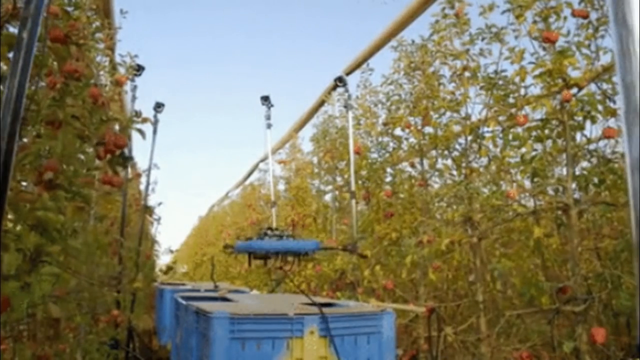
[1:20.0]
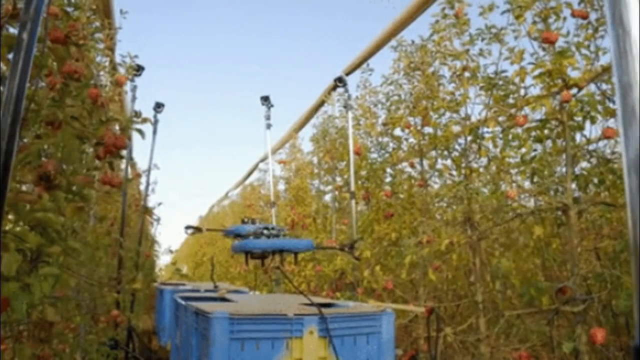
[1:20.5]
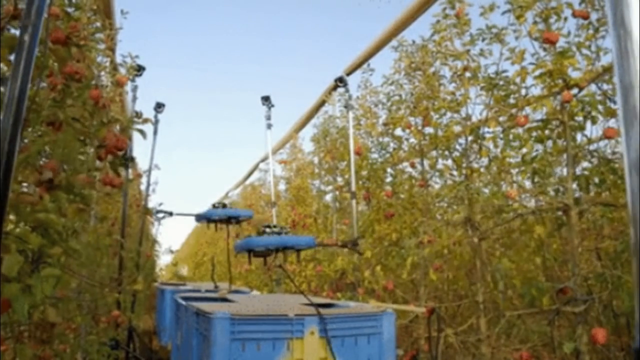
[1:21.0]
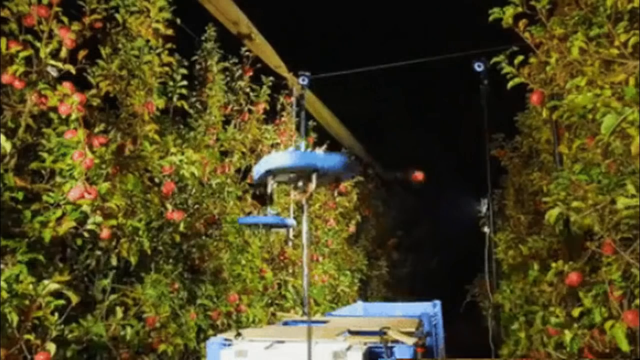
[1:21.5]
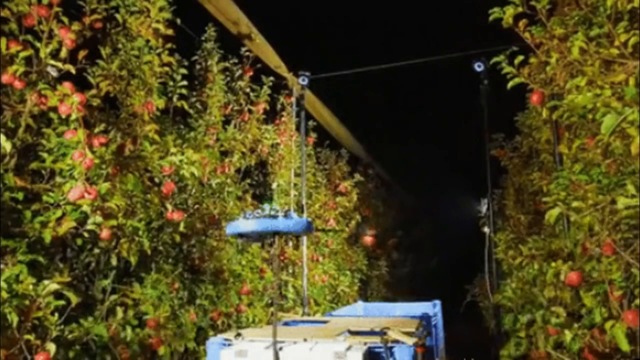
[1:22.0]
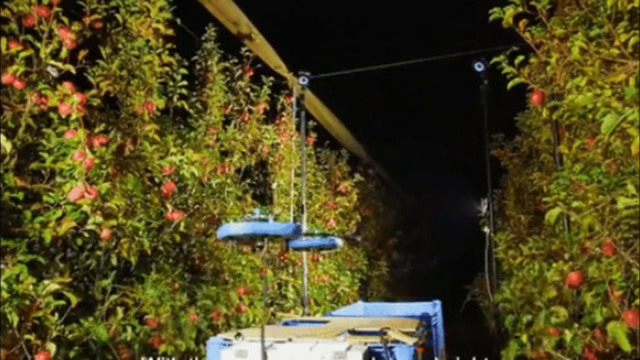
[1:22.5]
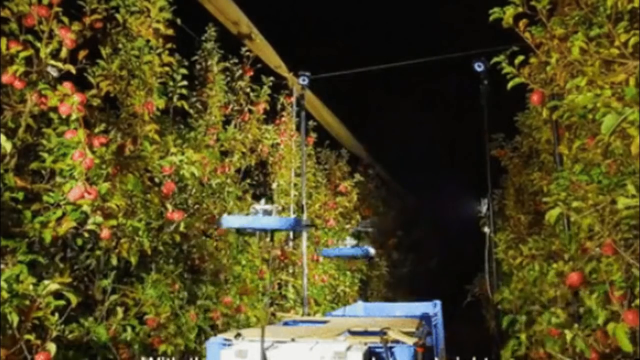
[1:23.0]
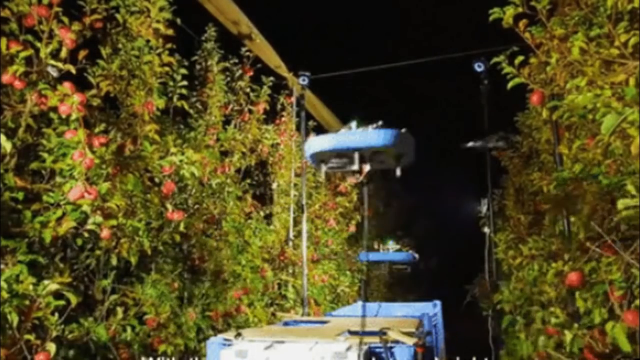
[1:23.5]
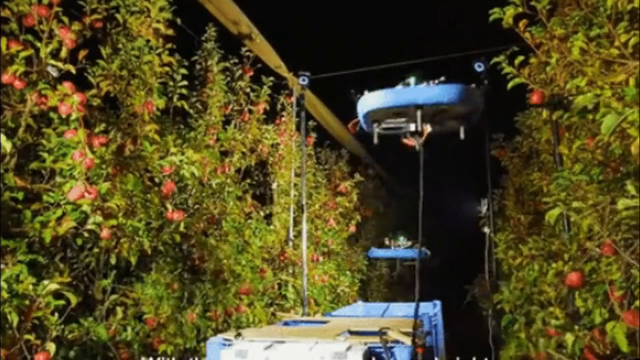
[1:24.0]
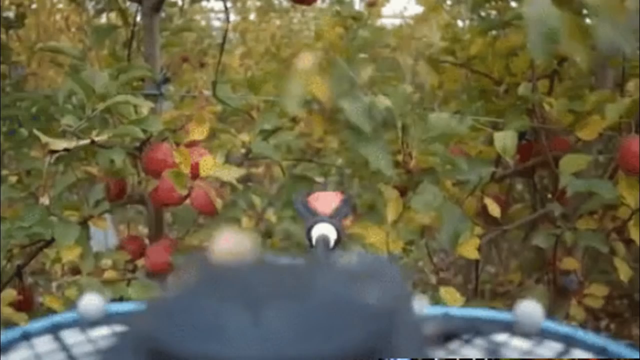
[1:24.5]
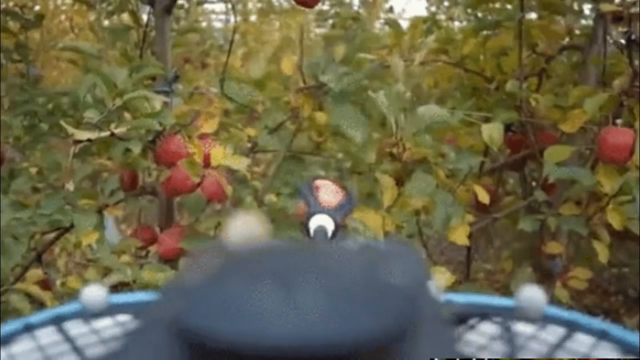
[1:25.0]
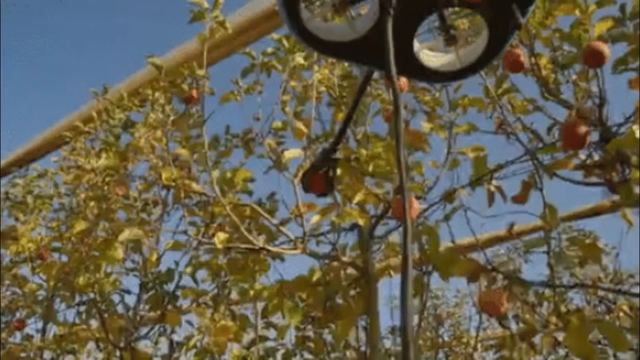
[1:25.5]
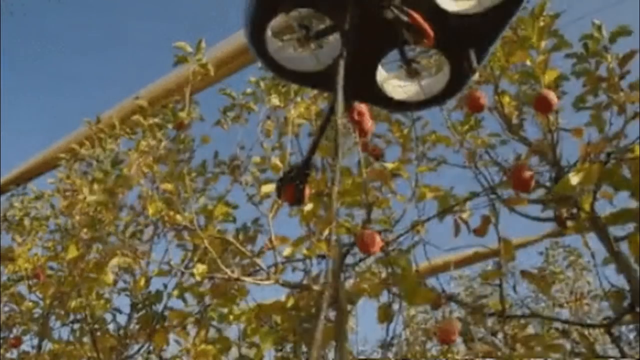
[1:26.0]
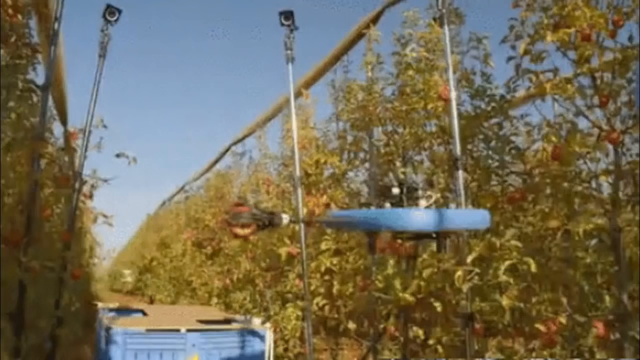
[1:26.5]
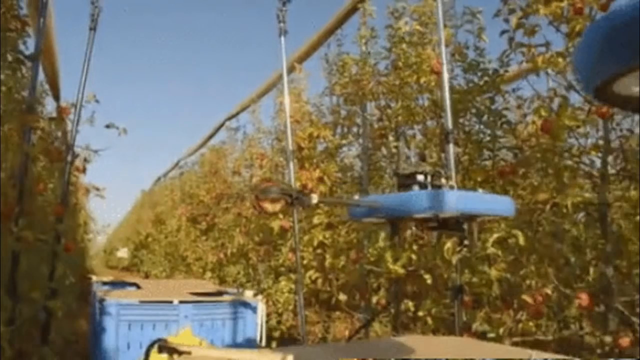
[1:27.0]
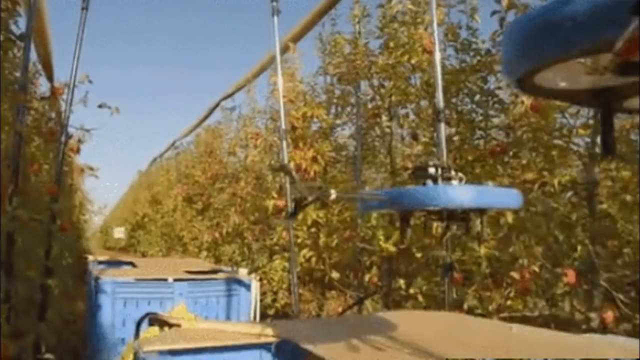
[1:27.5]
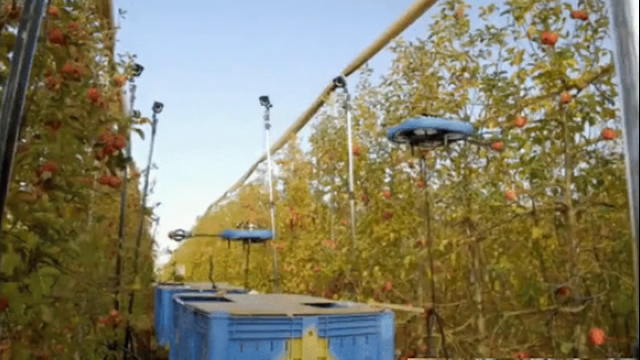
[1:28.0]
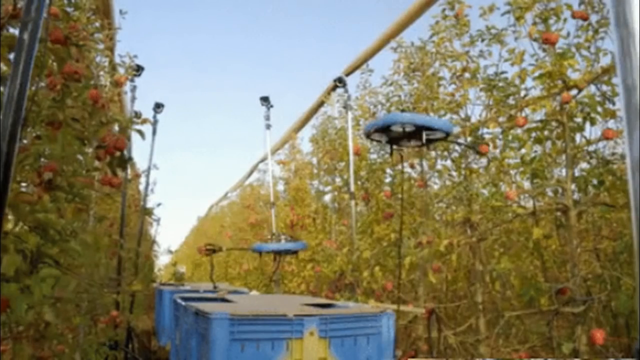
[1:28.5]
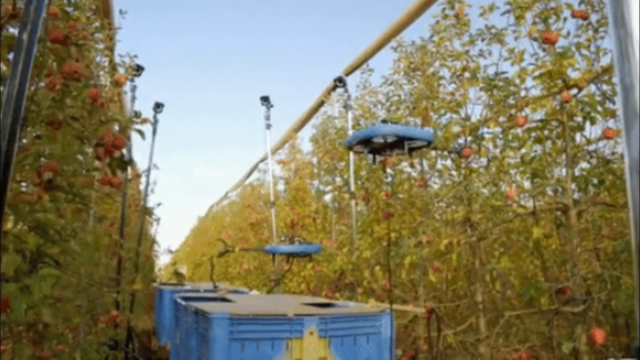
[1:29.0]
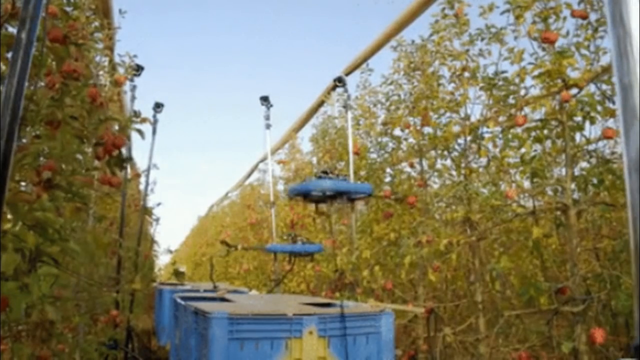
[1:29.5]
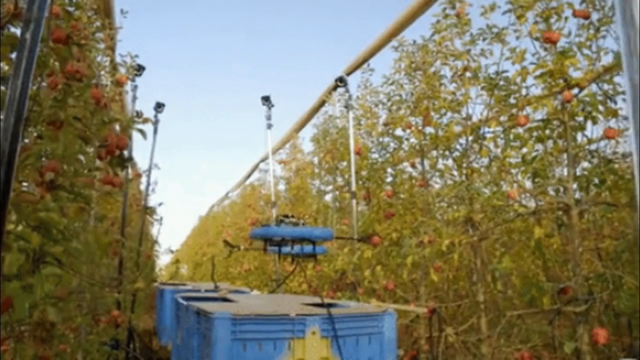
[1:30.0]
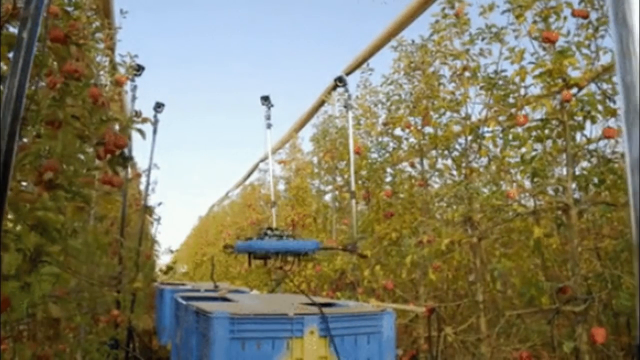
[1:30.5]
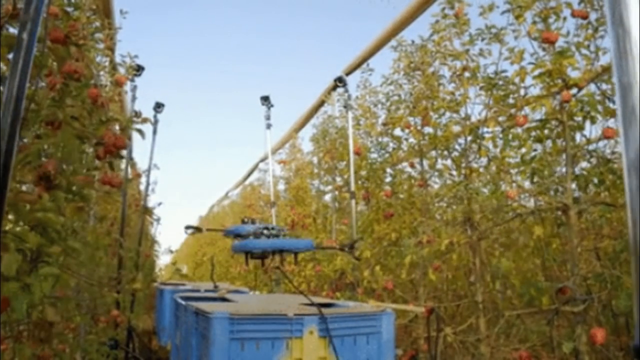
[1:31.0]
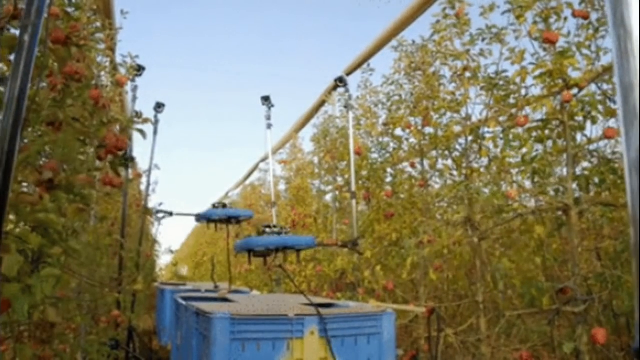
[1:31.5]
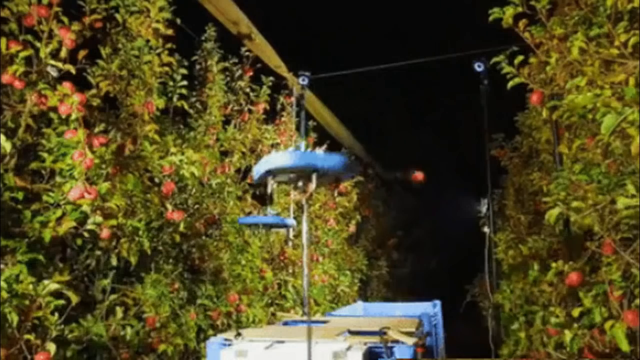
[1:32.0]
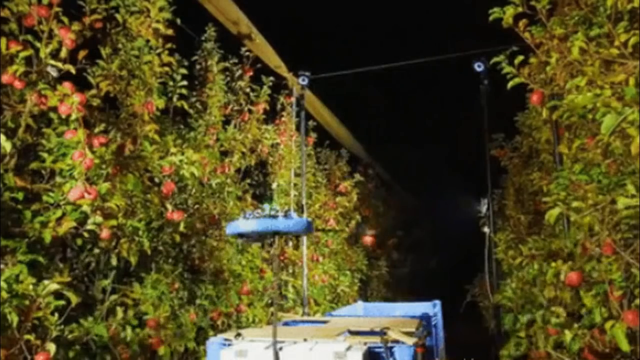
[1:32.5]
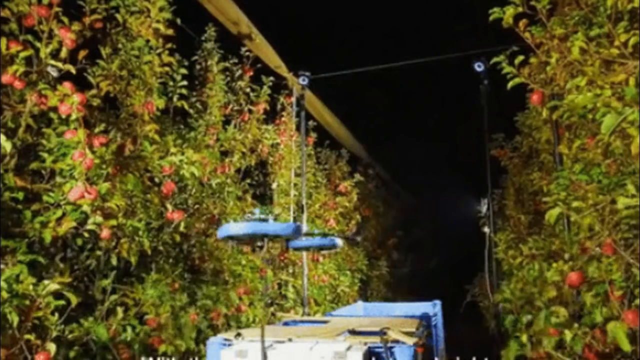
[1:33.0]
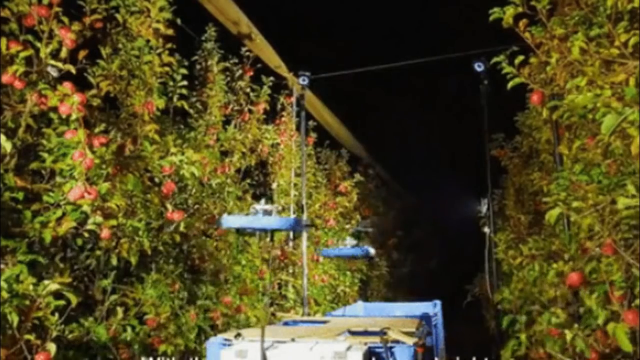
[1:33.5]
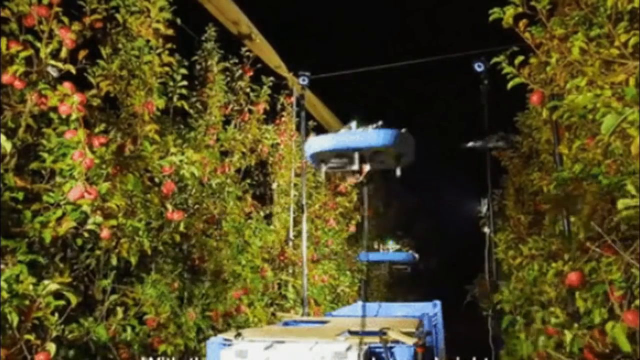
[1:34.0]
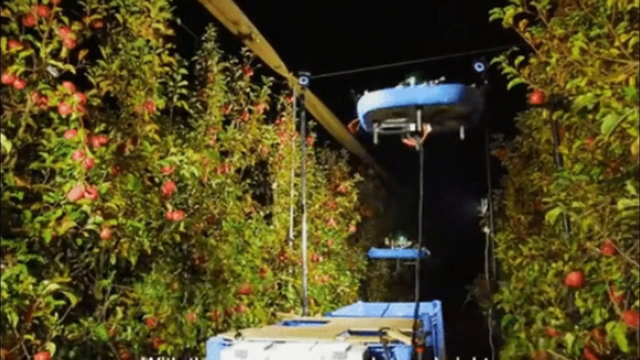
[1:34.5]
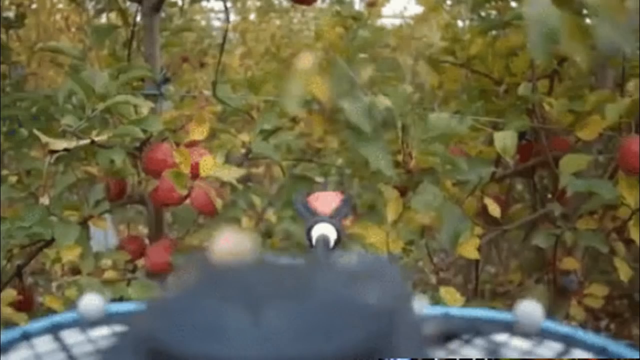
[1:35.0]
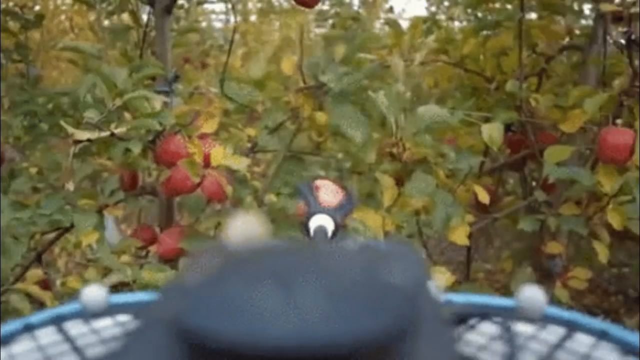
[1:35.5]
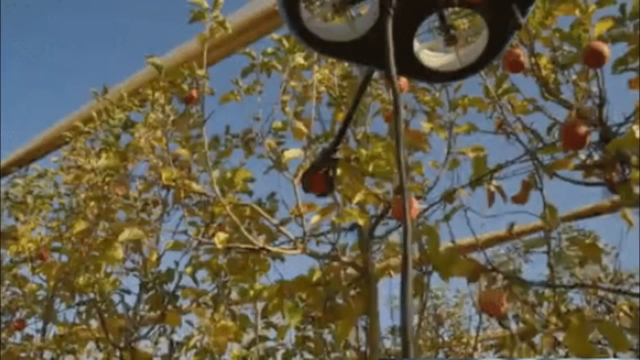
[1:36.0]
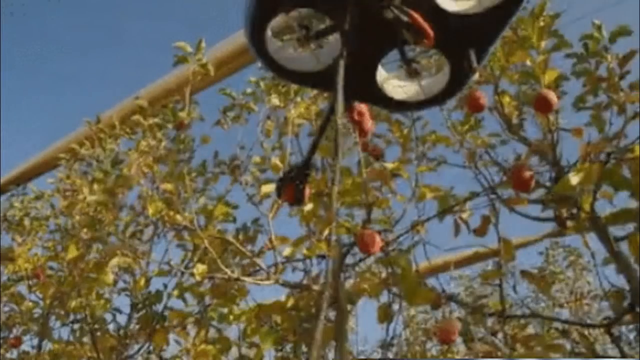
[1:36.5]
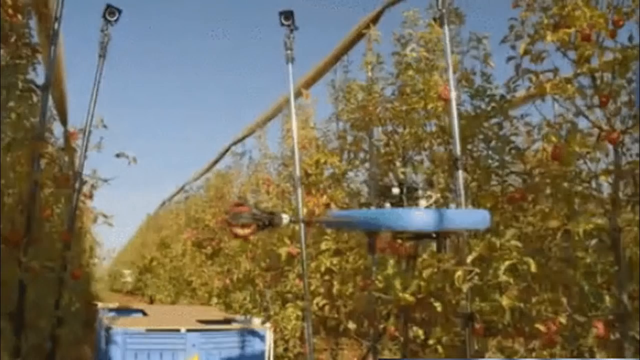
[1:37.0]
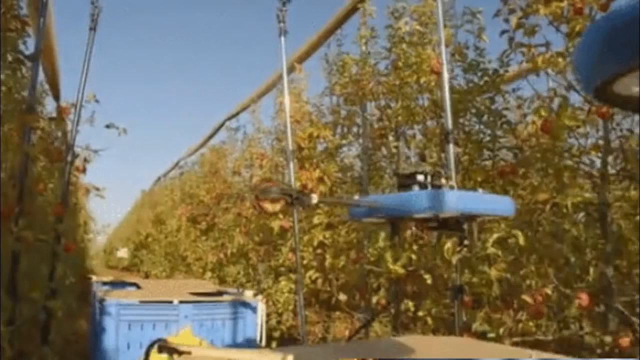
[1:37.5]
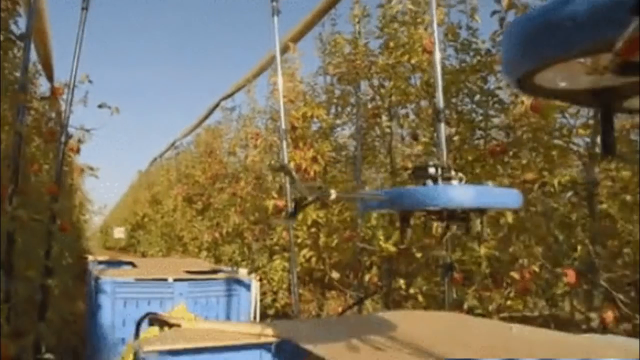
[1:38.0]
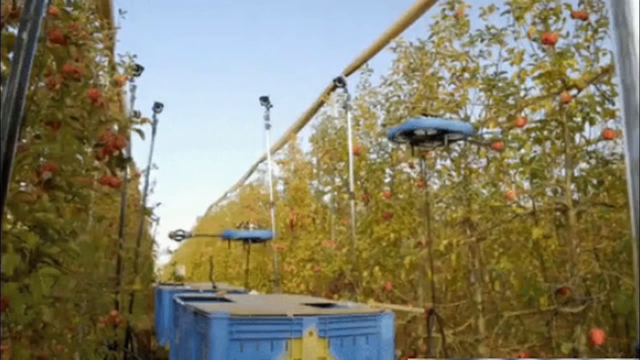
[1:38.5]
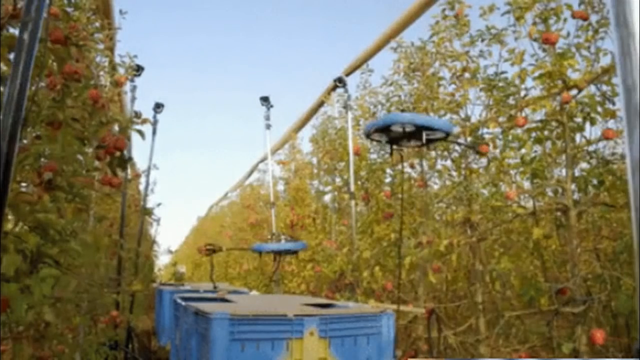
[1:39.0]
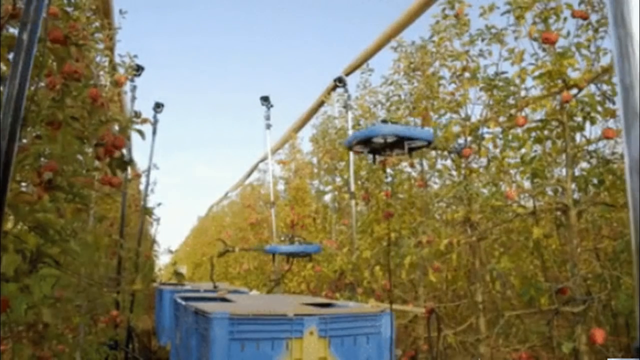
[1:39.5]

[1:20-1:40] In daytime, the view is along one of the rows of fruit trees, which could possibly be nectarines or peaches. It quickly changes to night: the sky is completely black, yet the trees on both sides are very well lit by the equipment. The scene then changes to daytime, where some of the equipment is flying around.